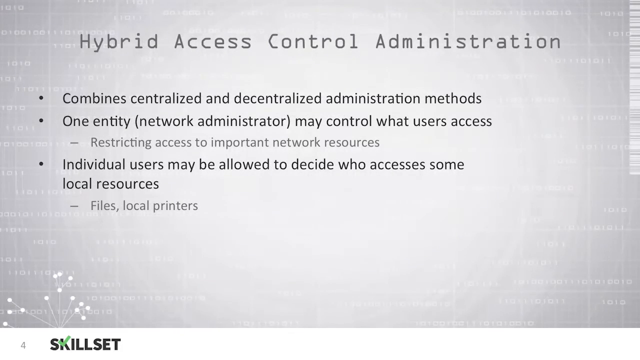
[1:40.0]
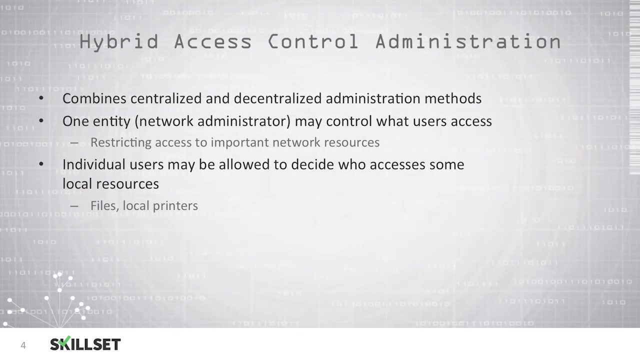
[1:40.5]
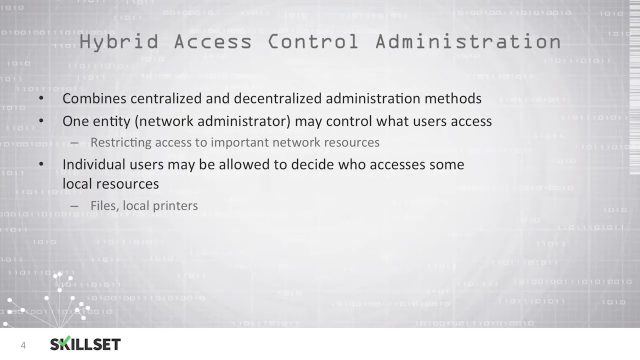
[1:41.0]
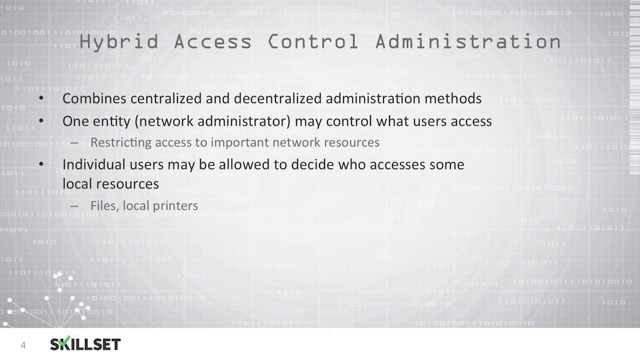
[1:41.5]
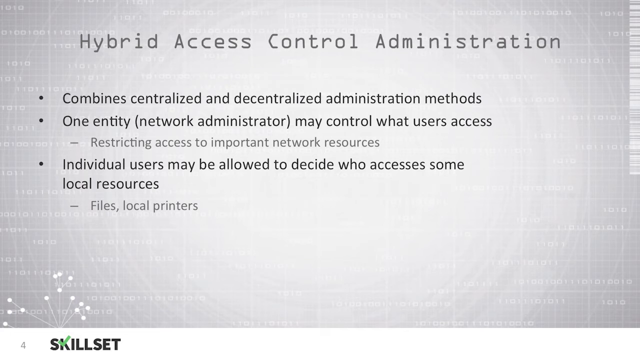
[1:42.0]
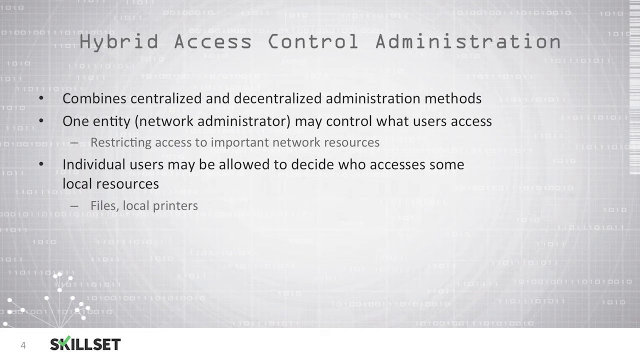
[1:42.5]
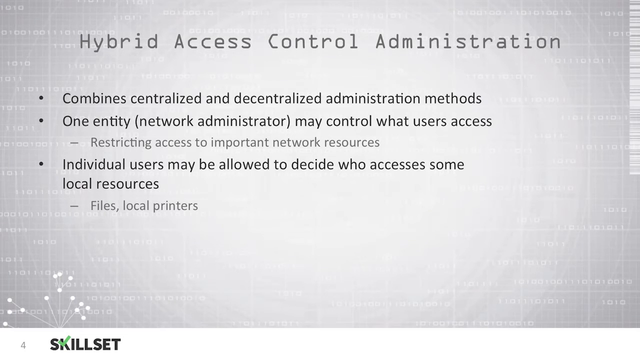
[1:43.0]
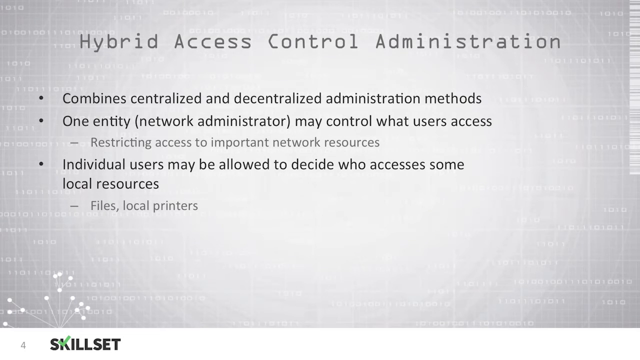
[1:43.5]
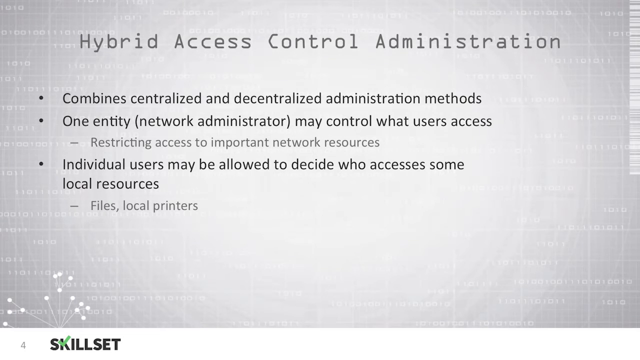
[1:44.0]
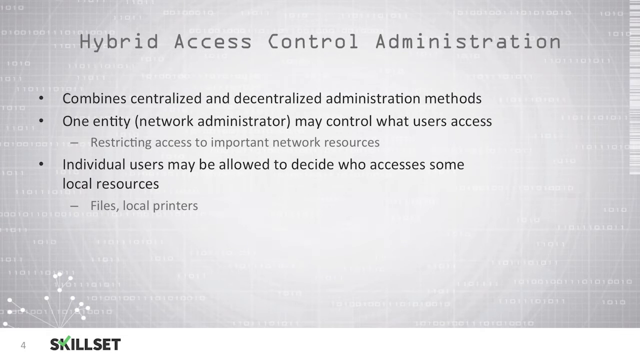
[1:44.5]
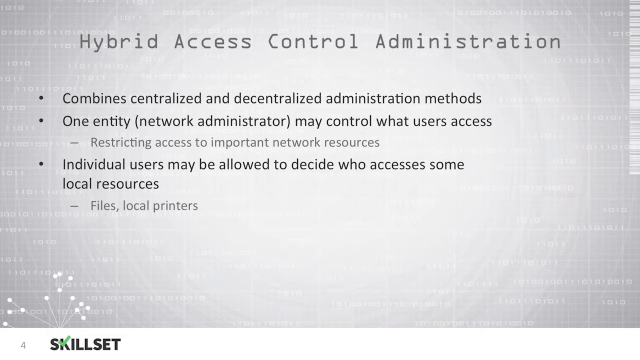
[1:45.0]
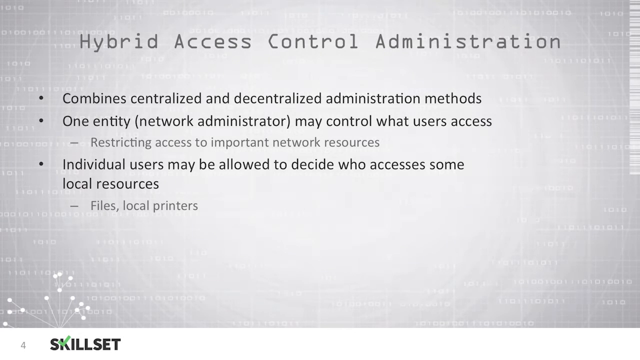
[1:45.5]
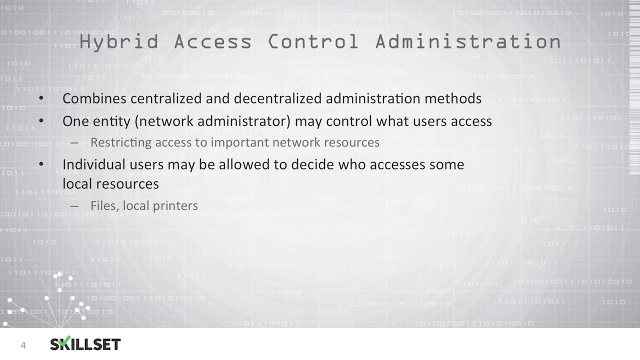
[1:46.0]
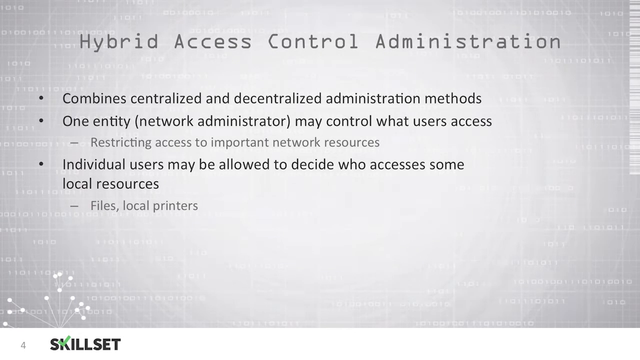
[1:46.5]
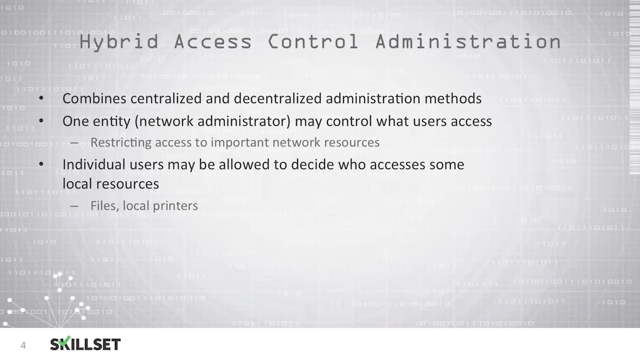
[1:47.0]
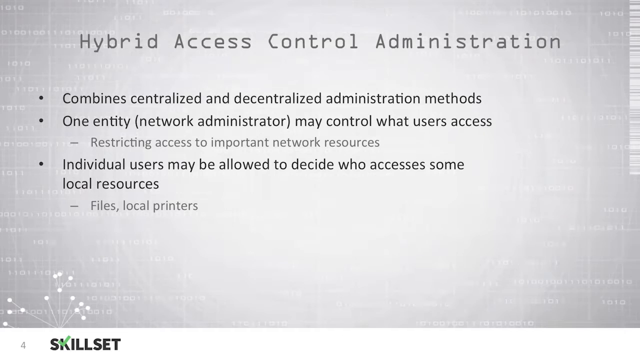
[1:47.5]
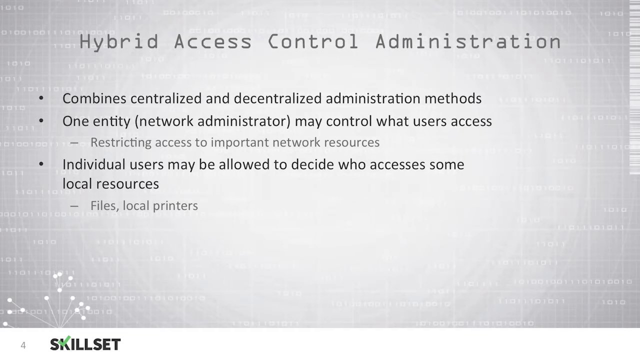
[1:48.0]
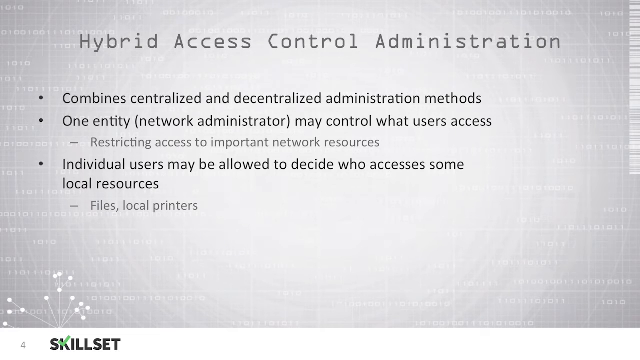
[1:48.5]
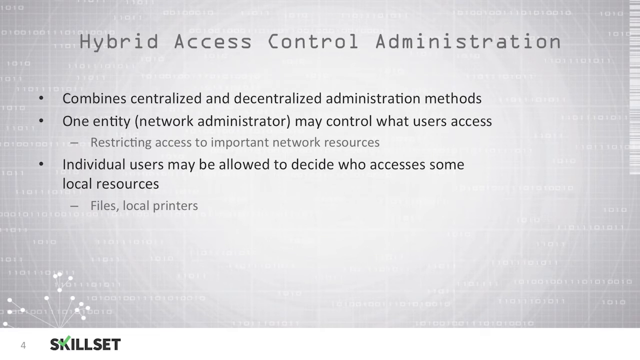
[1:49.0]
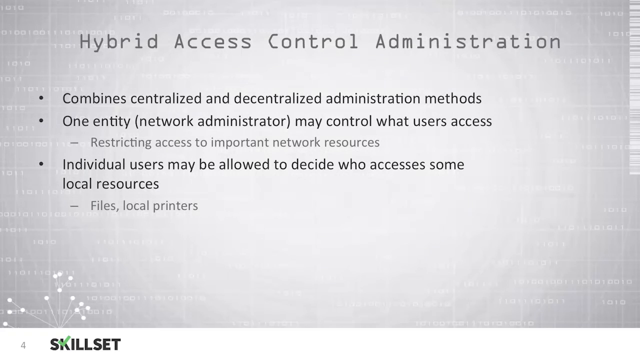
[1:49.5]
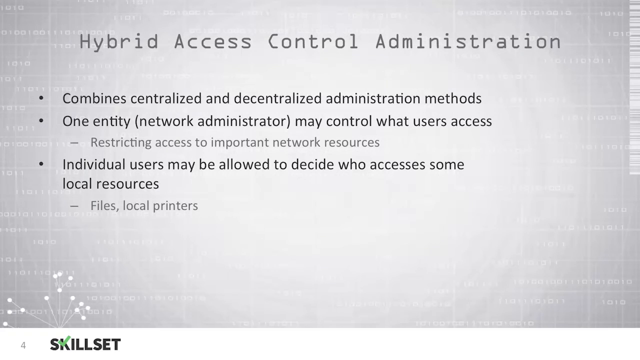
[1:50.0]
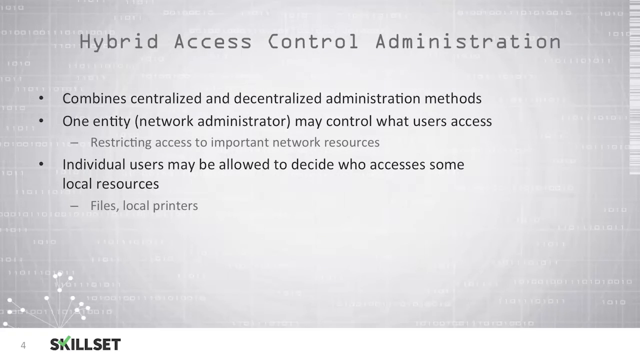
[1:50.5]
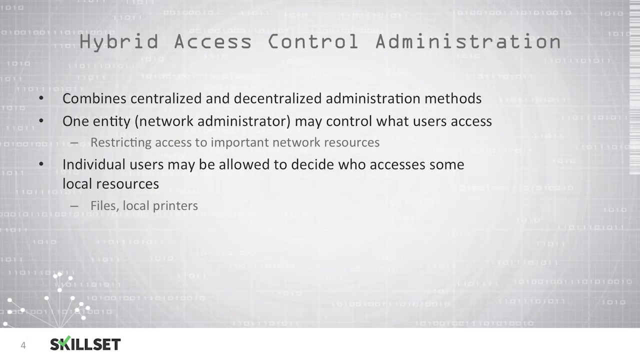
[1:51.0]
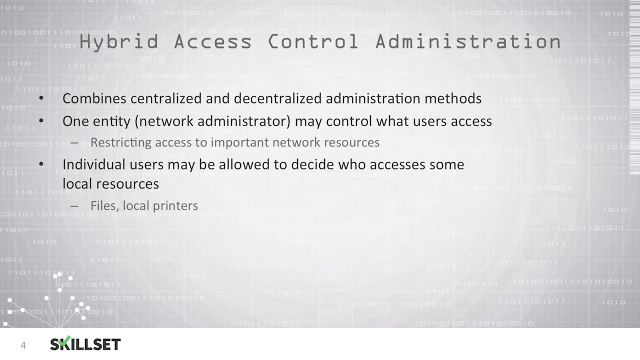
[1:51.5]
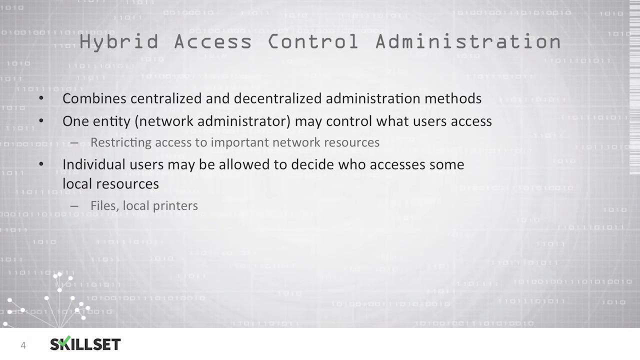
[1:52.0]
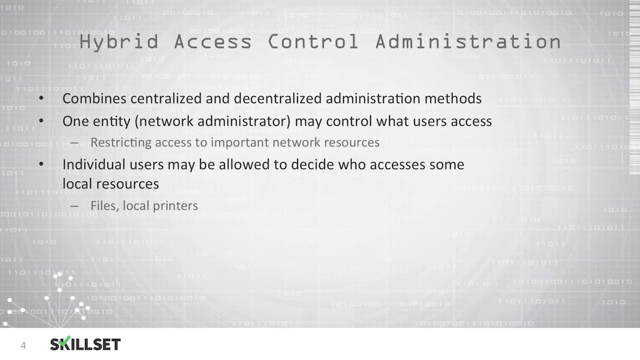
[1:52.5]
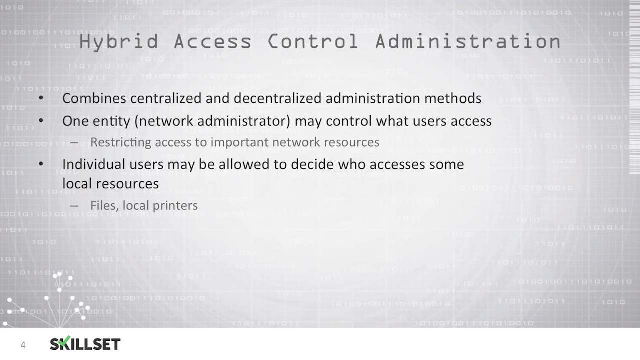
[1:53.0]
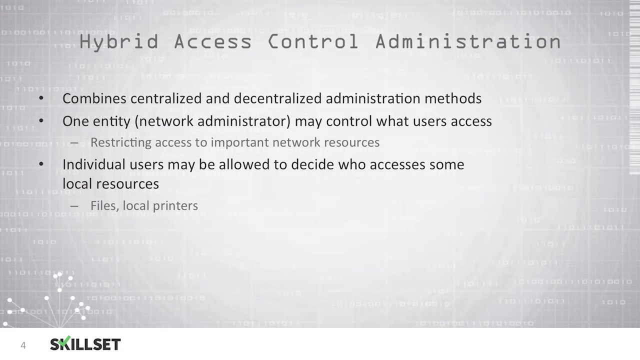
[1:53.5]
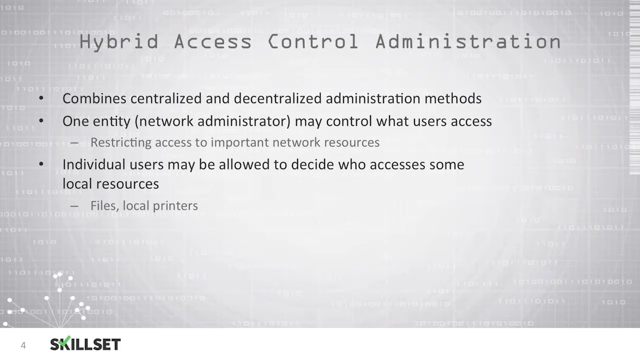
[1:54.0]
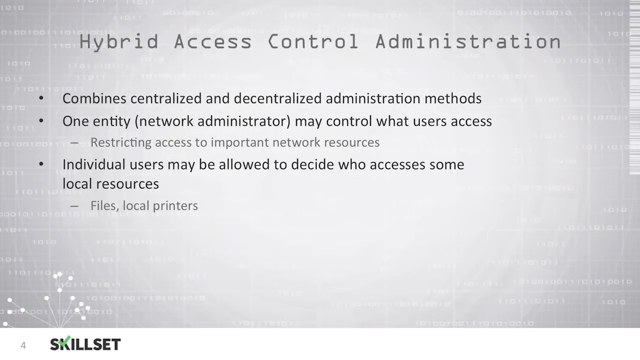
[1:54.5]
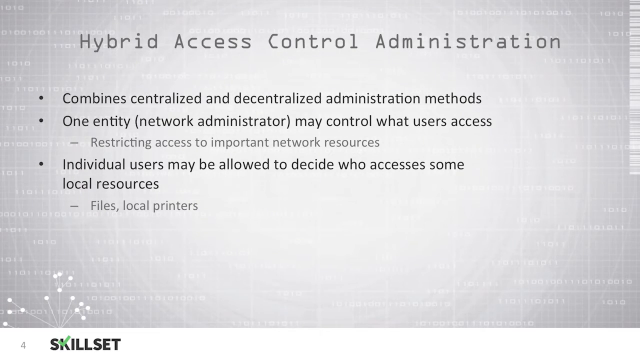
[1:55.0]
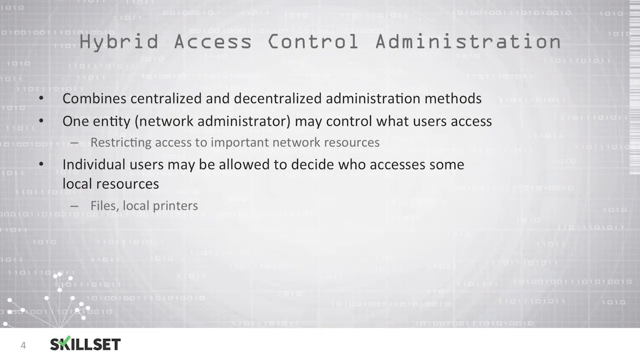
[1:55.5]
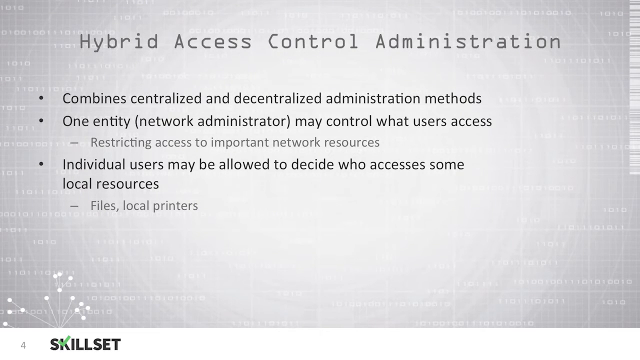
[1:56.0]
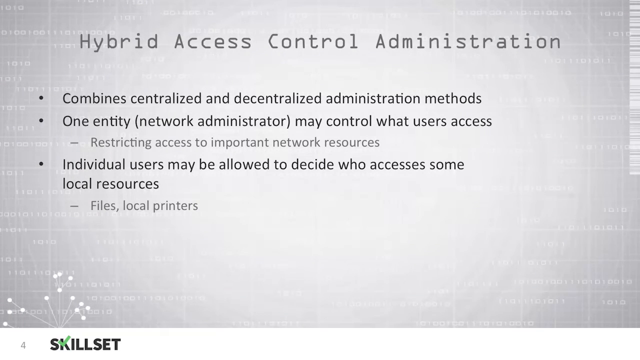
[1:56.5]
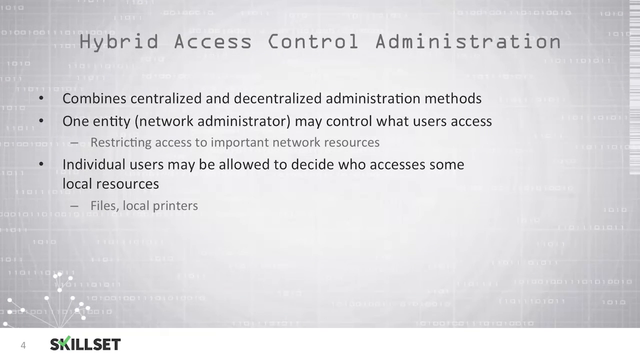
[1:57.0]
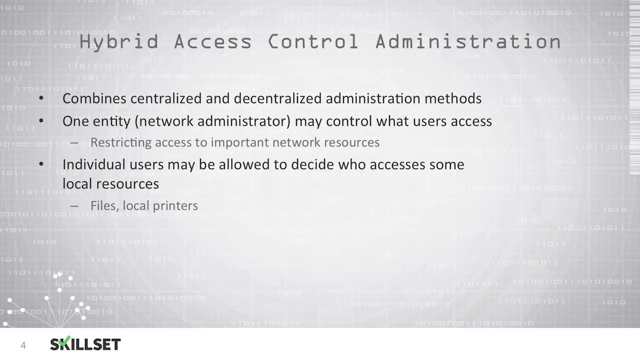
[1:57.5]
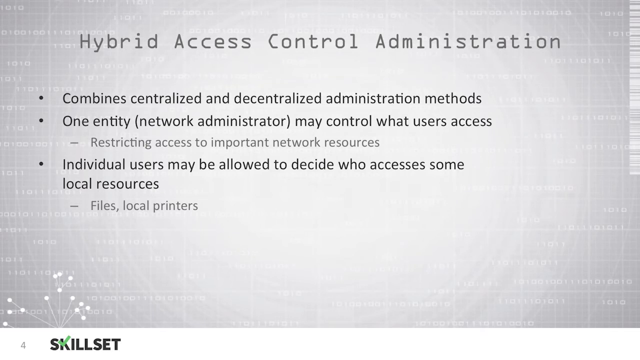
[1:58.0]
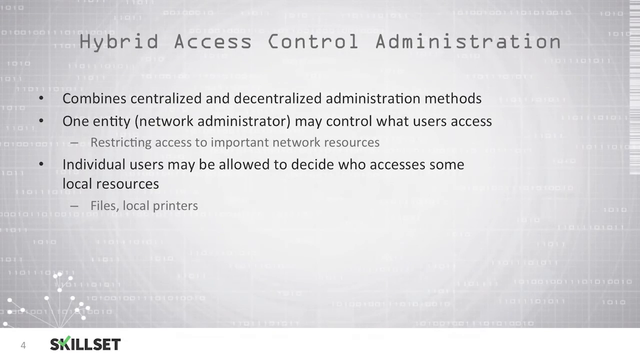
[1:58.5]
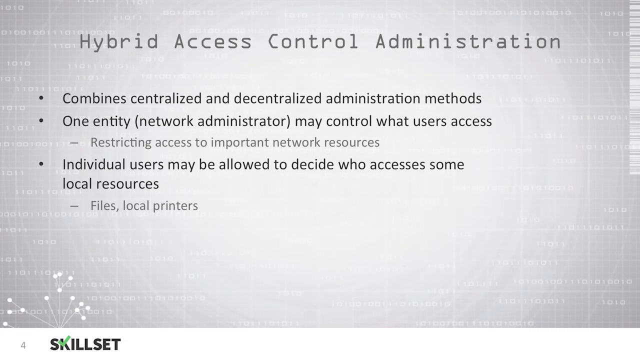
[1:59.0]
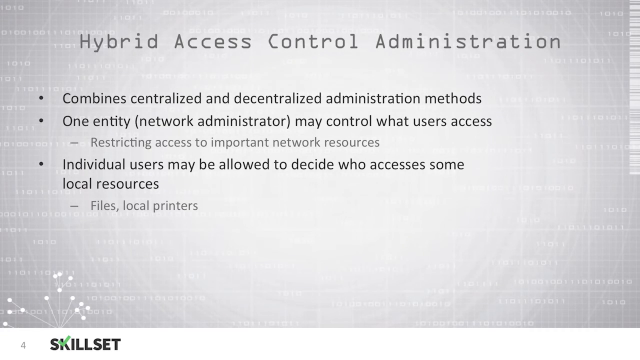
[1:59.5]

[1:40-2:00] Page four of the skill set presentation shows the title Hybrid Access Control Administration with three main points: "combine, centralize, and decentralize administration methods"; "one entity (network administrator) may control or what users access", followed by a support point in a lighter grayish font reading "restricting access to important network resources"; and "individual users may be allowed to decide who accesses some local resources", followed by one short support point, "files and local printers". "Skill set" appears in the bottom left, and the background is white gradient with a little data patterning on the left and right.